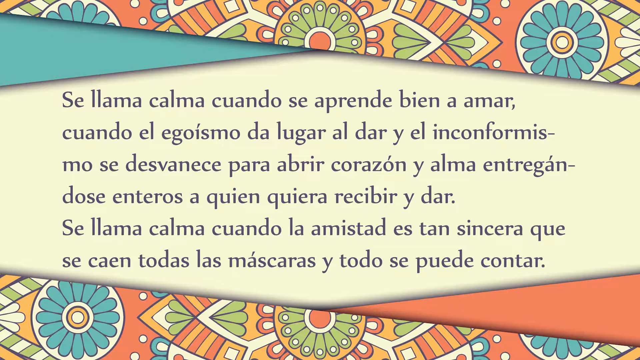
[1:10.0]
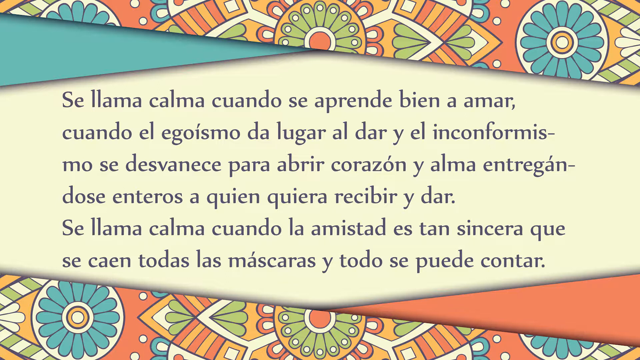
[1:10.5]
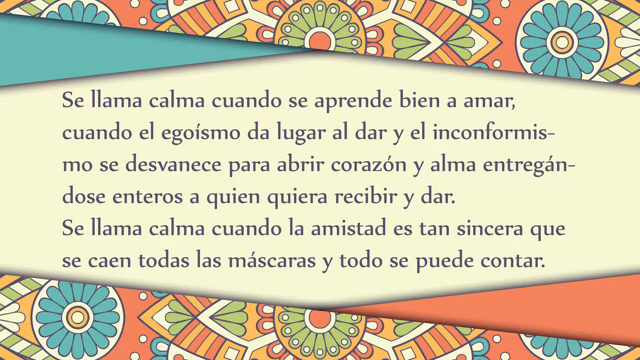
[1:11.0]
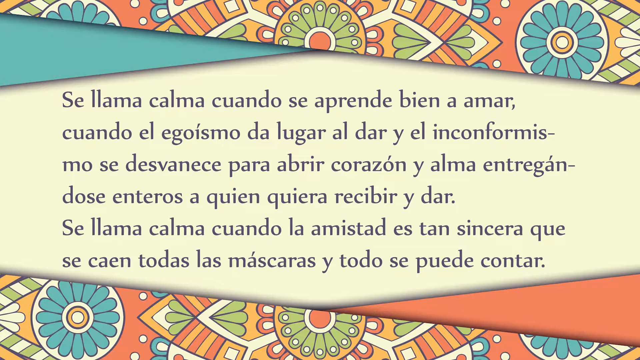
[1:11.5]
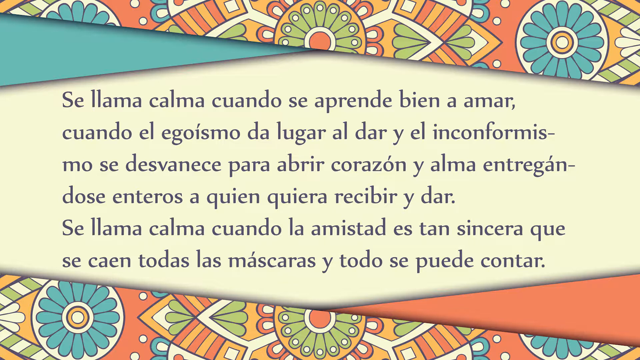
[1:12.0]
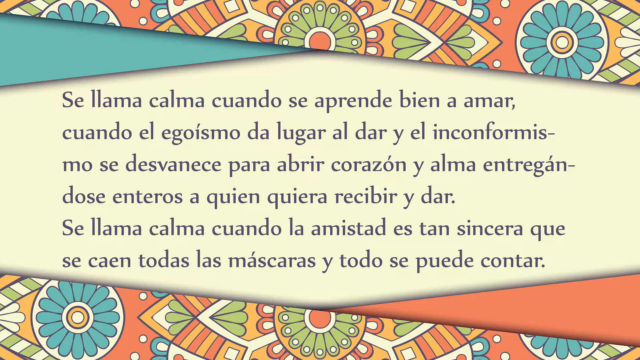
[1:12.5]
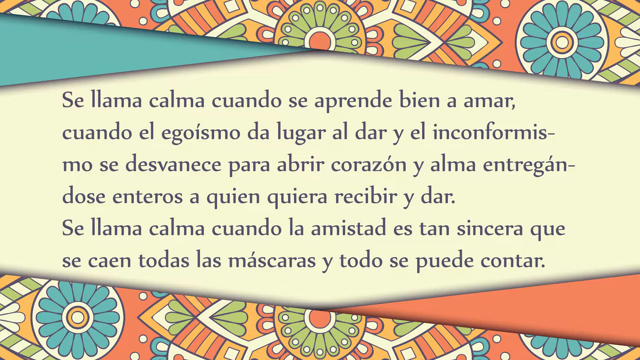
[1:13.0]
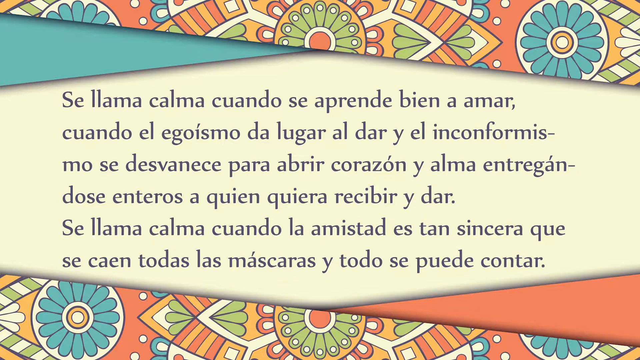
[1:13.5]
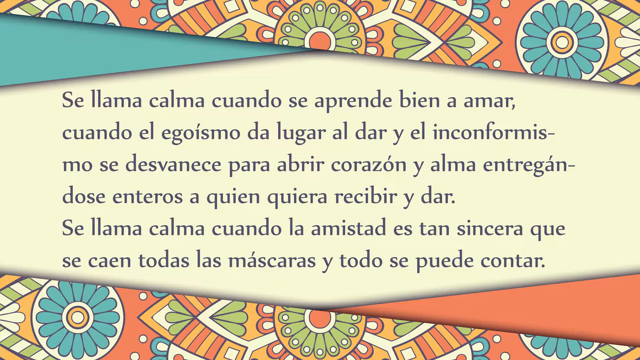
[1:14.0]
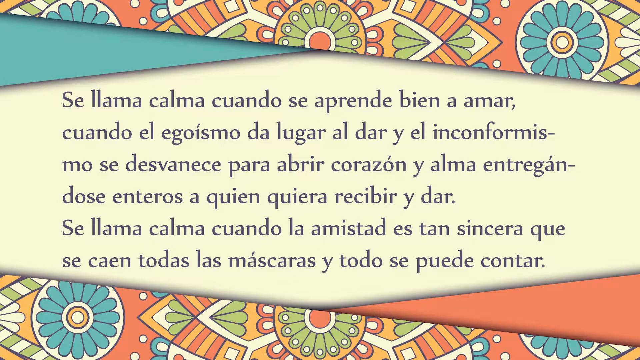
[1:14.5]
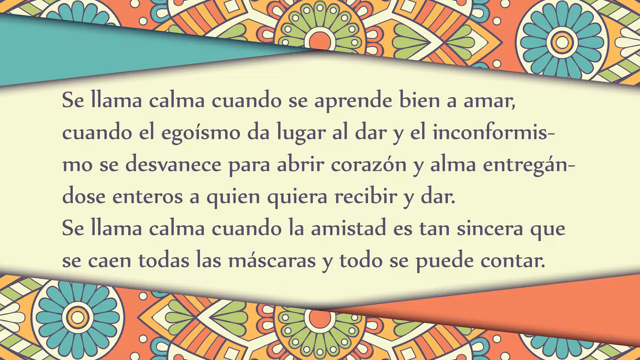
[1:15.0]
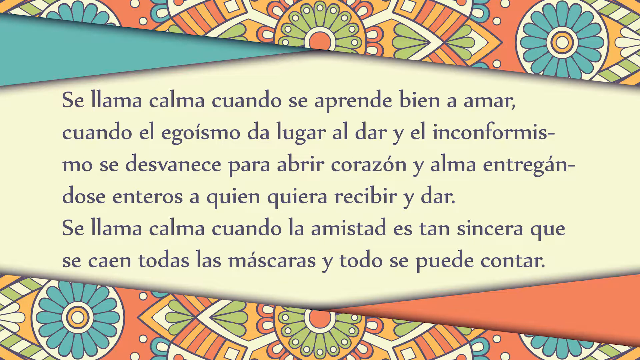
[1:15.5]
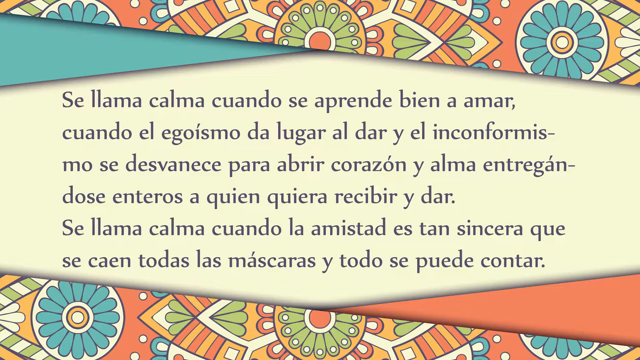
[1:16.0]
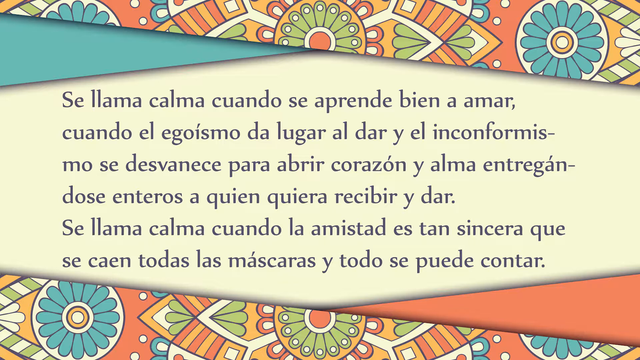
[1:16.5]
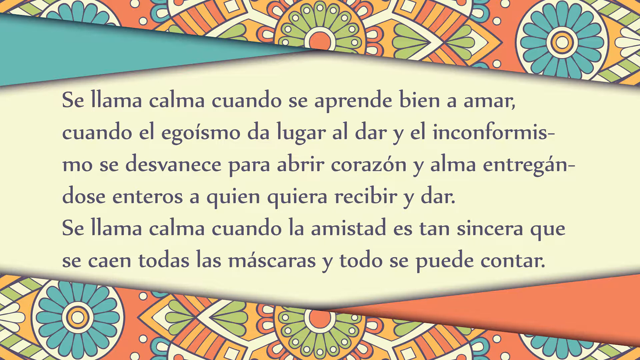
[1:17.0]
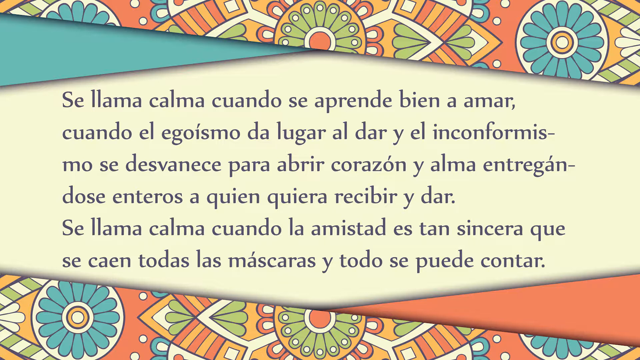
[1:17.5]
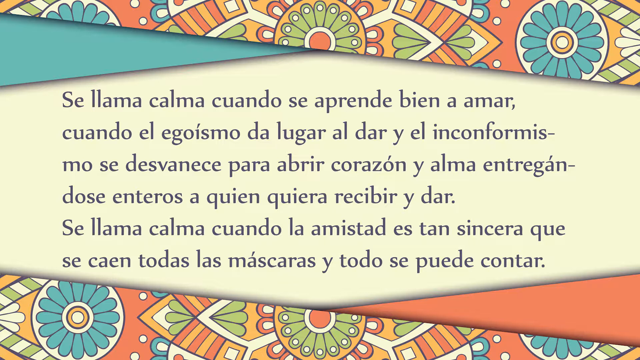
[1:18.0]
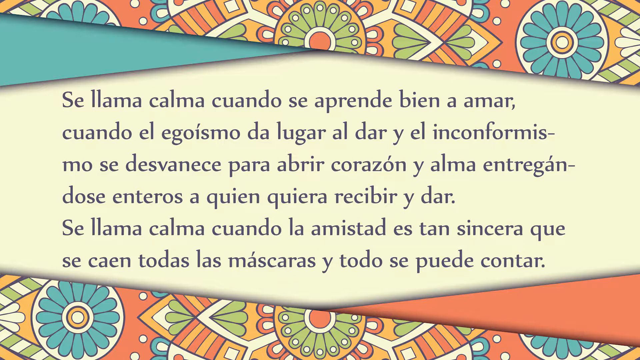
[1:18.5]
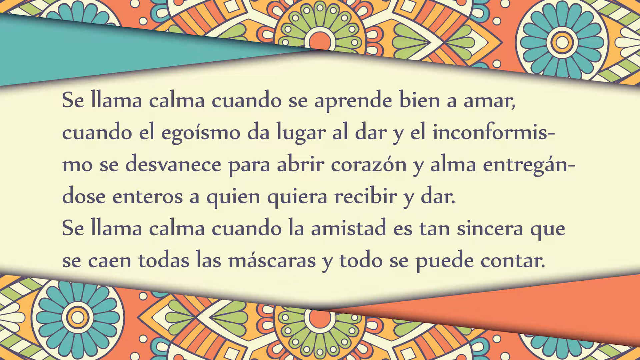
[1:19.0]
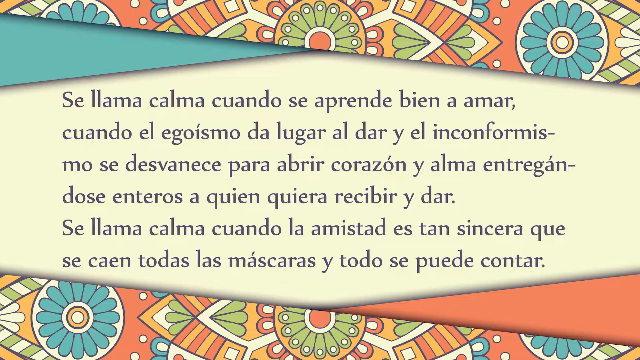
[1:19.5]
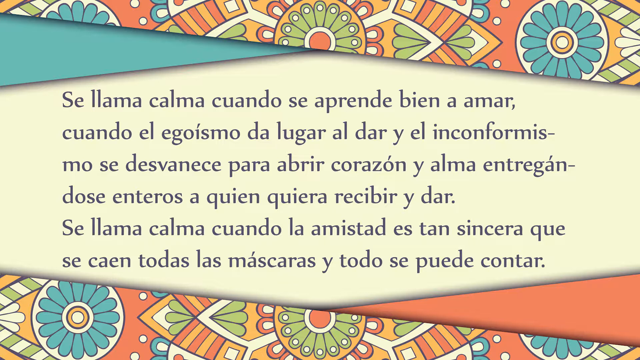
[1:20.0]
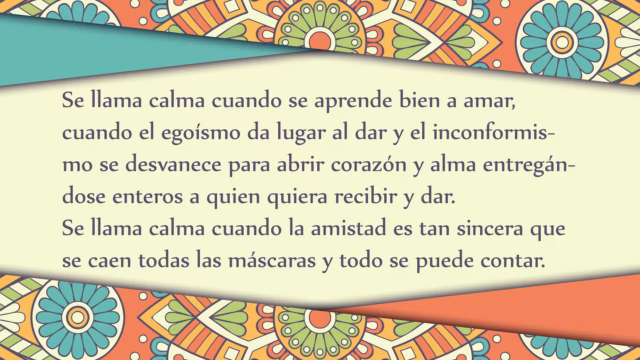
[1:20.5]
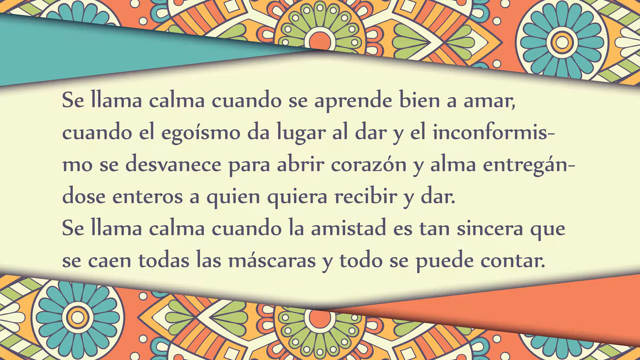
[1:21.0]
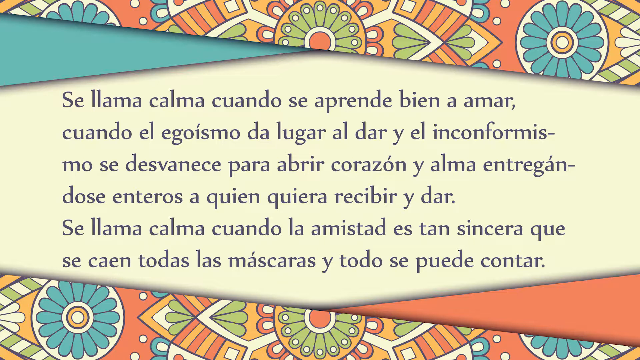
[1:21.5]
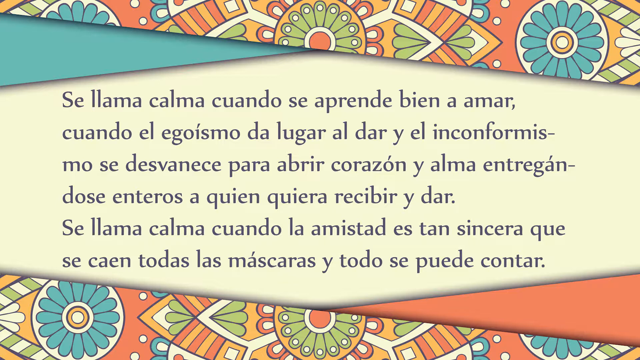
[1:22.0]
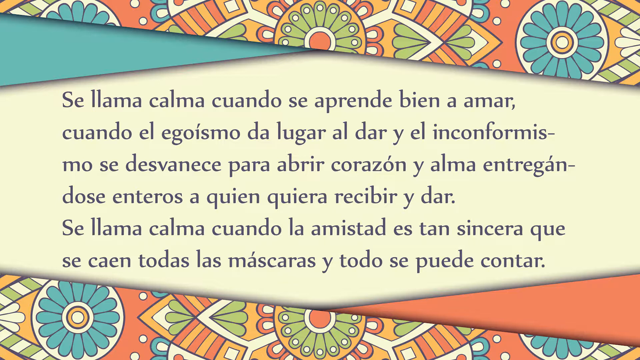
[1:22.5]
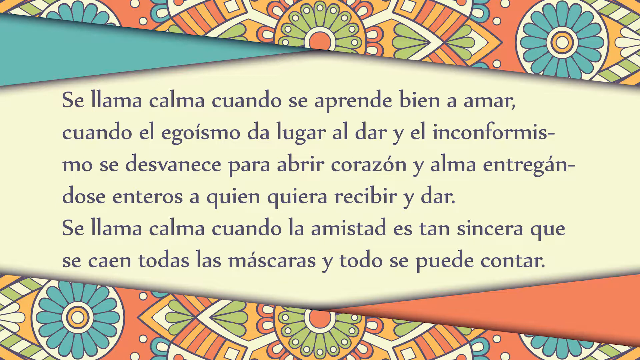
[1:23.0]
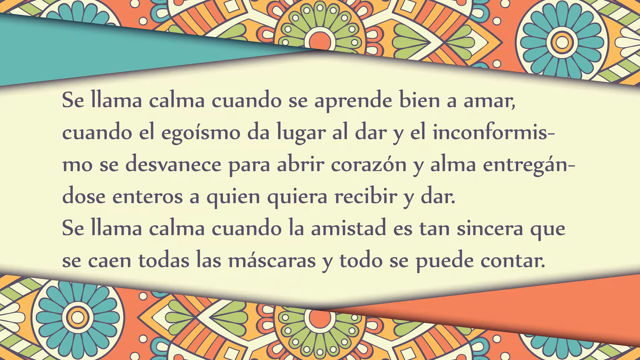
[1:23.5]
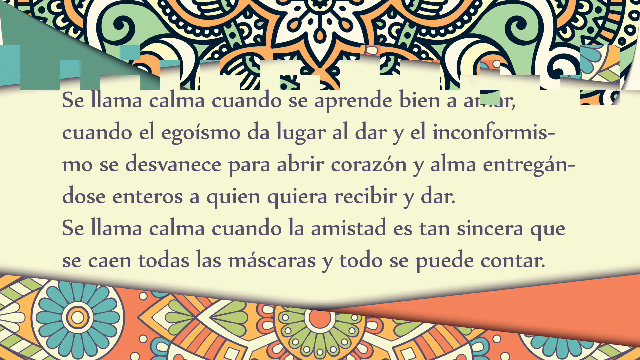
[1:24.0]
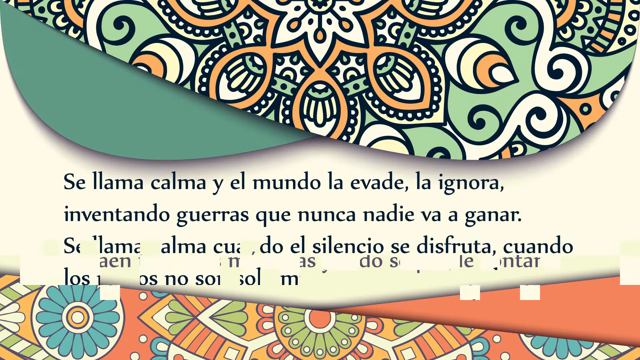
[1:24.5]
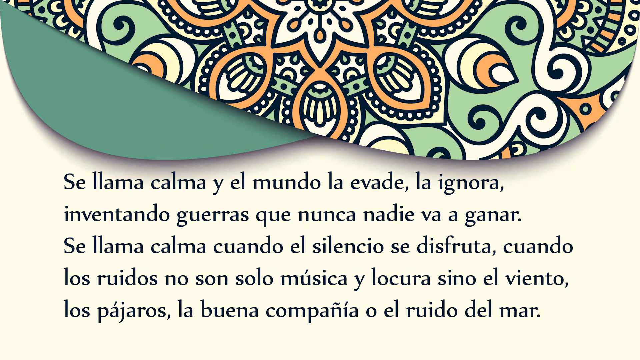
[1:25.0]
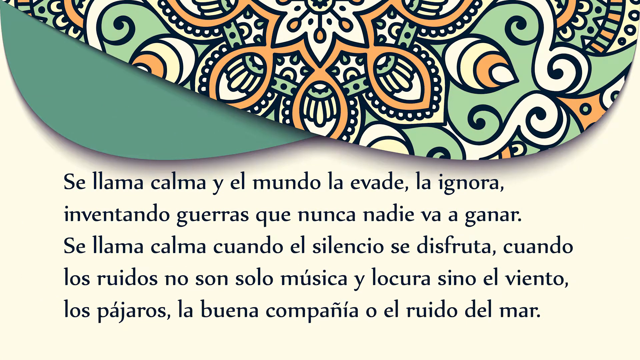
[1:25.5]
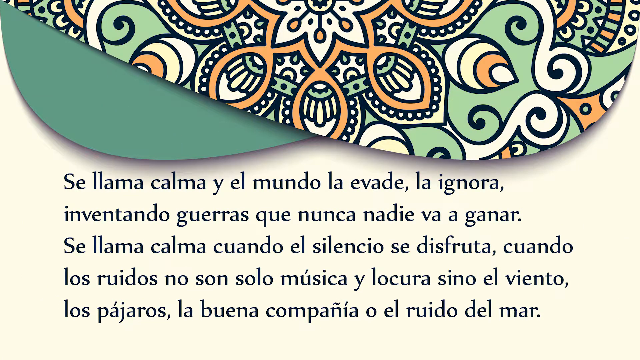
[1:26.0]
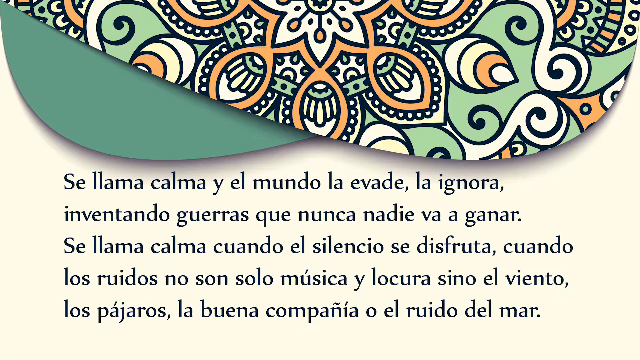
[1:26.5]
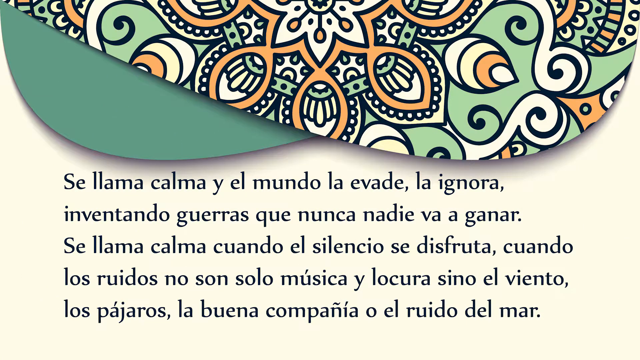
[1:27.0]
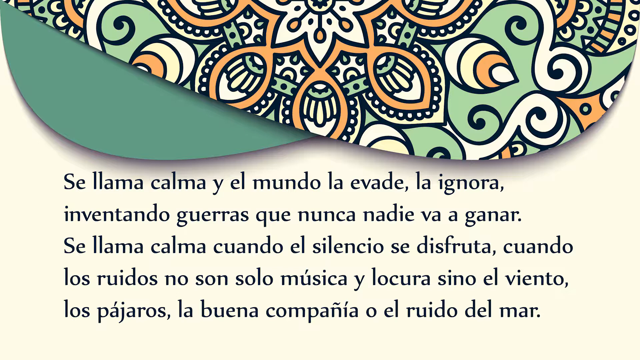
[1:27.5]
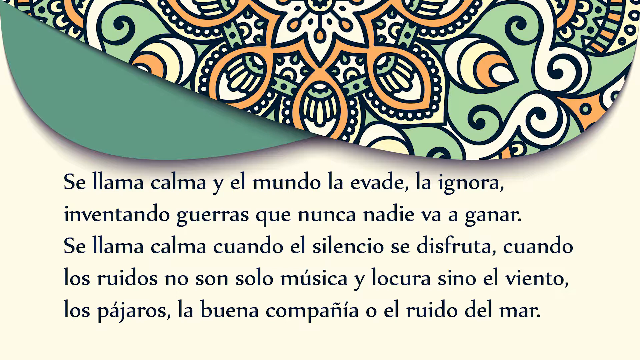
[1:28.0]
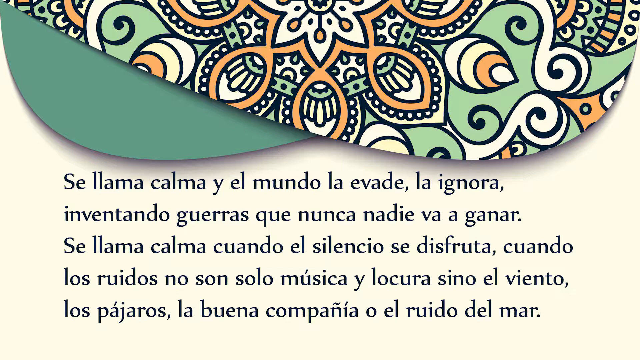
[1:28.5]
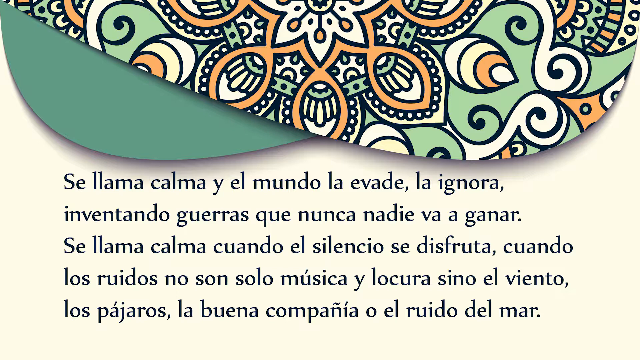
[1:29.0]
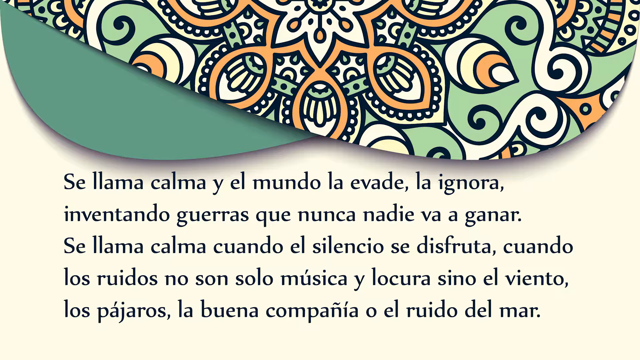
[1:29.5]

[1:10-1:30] The same text remains unchanged, then finally dissolves from the top. As it dissolves, another floral-like pattern appears at the top, coming down from the top left corner, angling downward, curving and going up to the right side. It has a star pattern in the center extending to teardrop-like points, almost paisley-like. The colors are more muted: soft, almost pastel greens, yellows and orange. On the left side, underneath the corner where the pattern starts, is a small crescent, a sliver of a circle in a darker green. Below that is the text on a brighter cream-colored background, with two sentences that start with the same three words. At the very top center, half of the star pattern is visible. Within the star's center is a partially cut-off yellow circle outlined in black, with lines sticking out almost like spokes to orange dots, and black dots between the spokes. The raindrop-like ends each have white or outlined dots circling them.